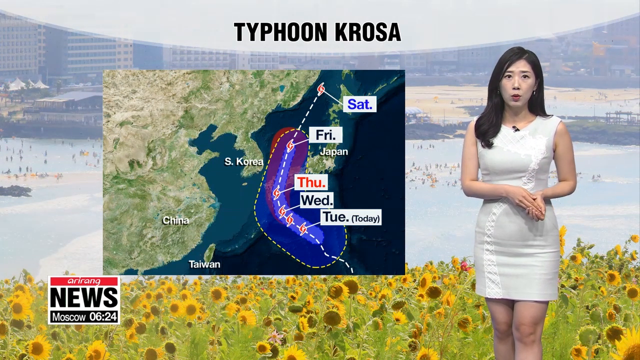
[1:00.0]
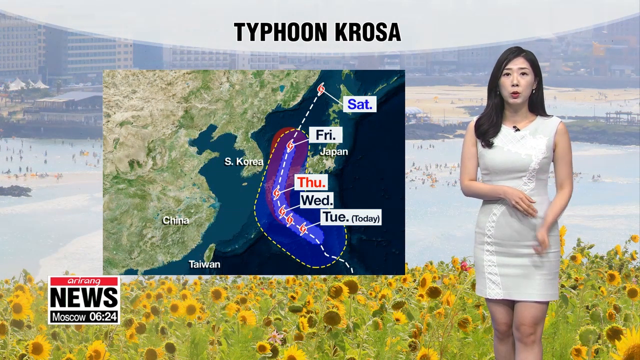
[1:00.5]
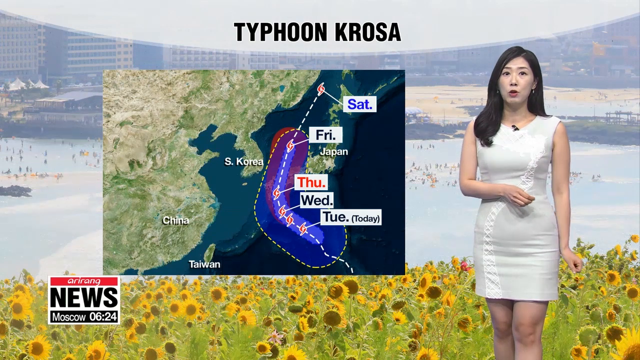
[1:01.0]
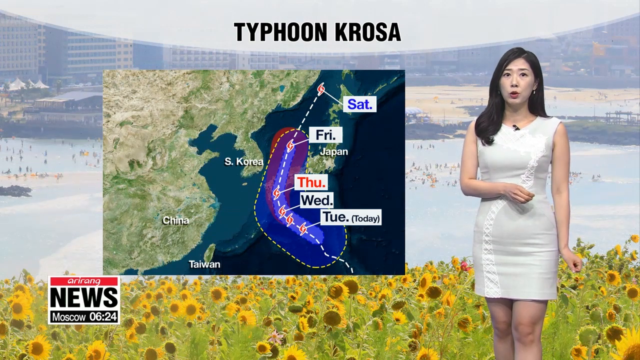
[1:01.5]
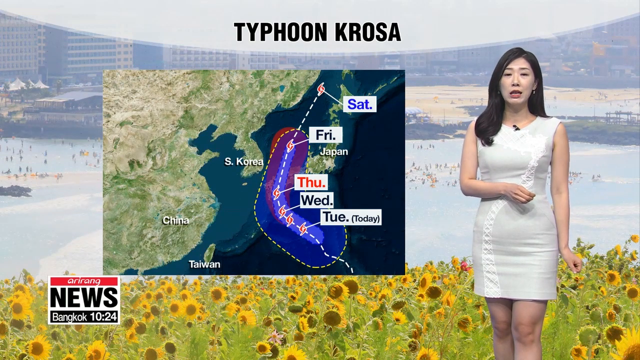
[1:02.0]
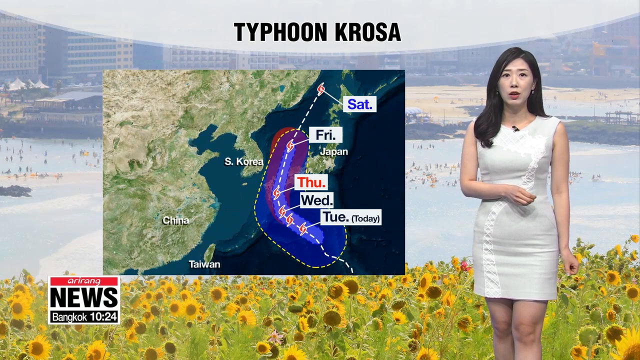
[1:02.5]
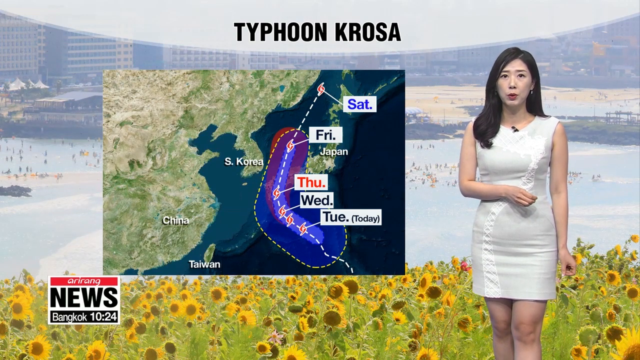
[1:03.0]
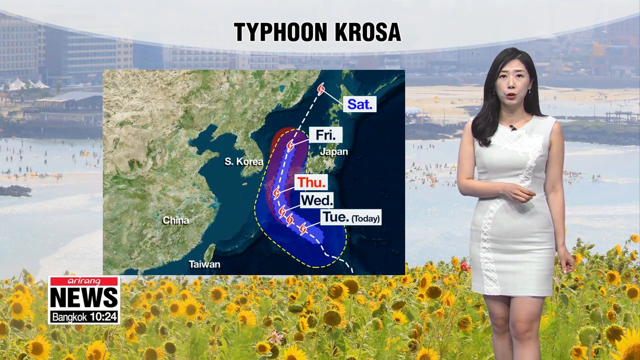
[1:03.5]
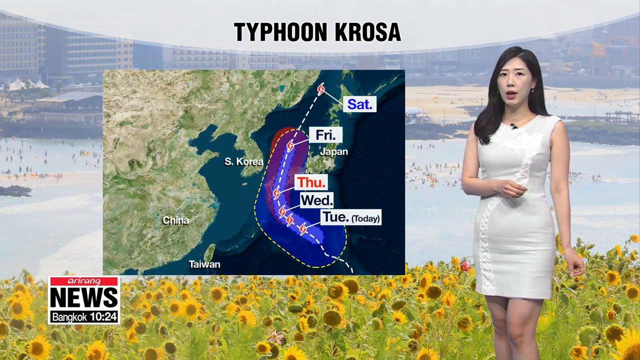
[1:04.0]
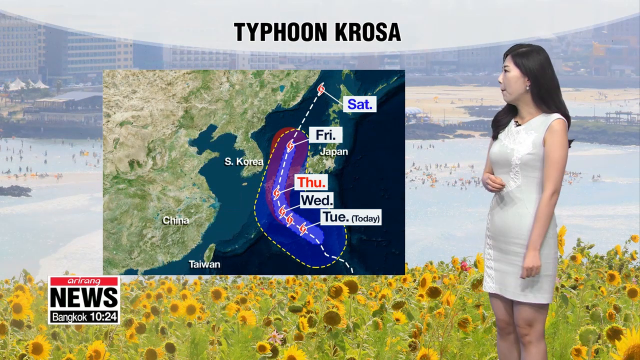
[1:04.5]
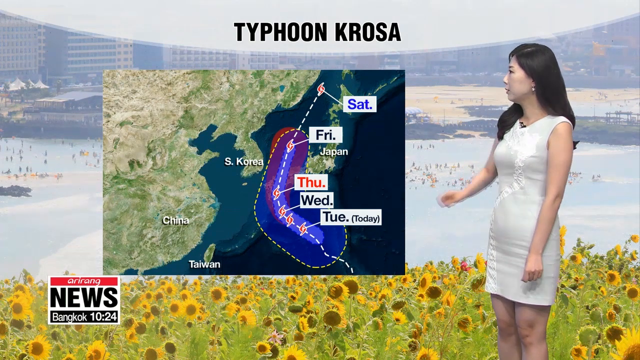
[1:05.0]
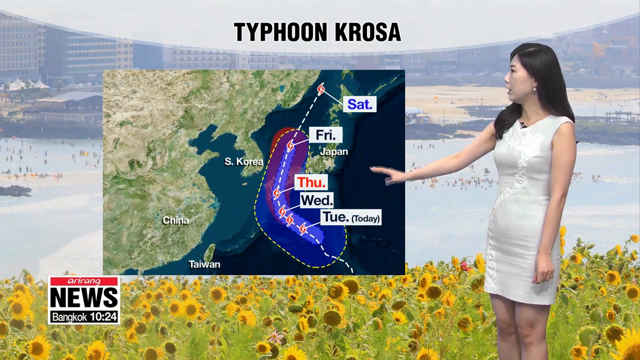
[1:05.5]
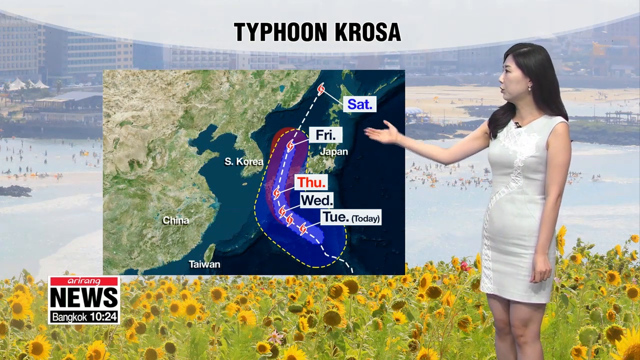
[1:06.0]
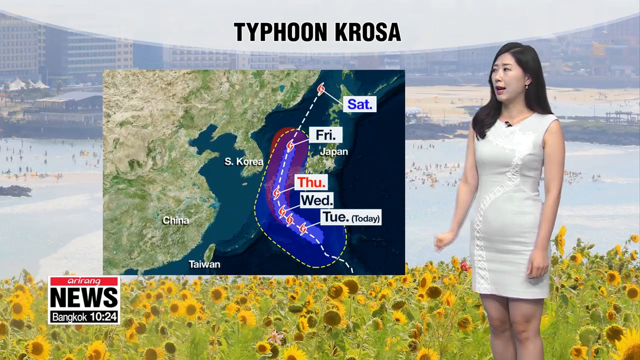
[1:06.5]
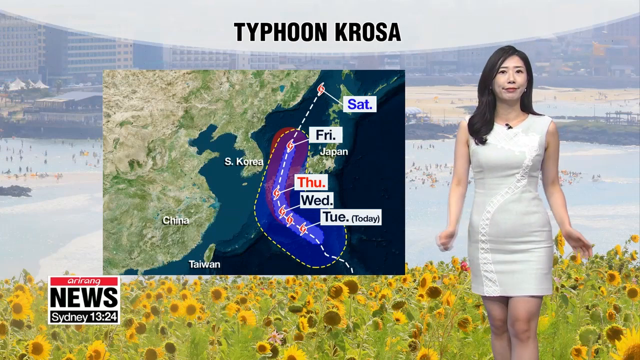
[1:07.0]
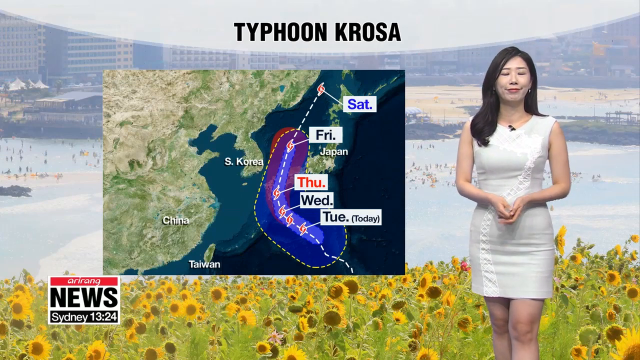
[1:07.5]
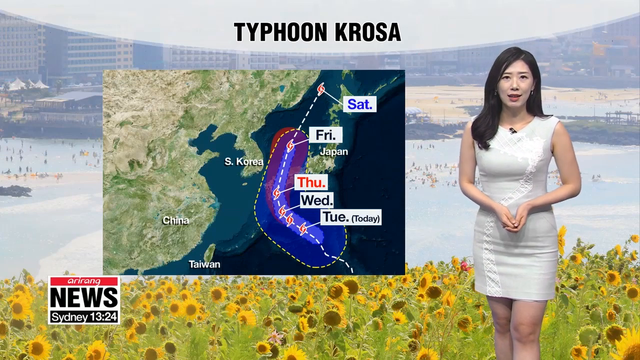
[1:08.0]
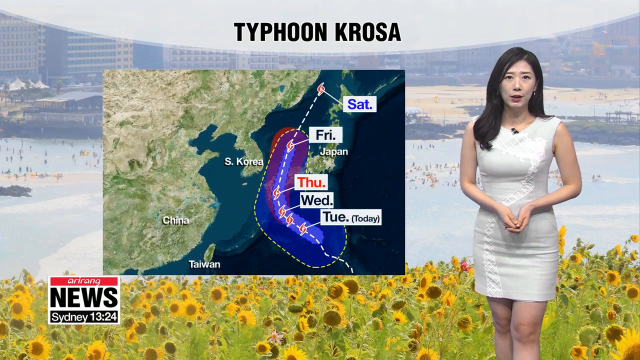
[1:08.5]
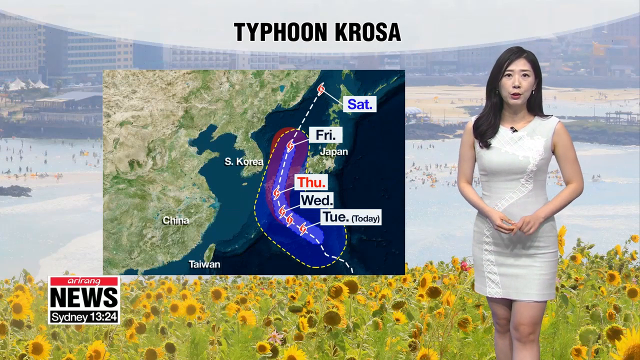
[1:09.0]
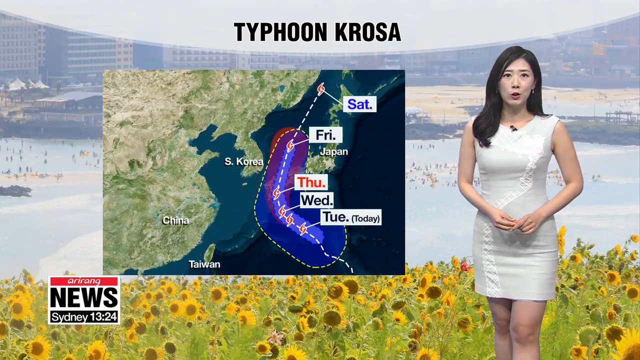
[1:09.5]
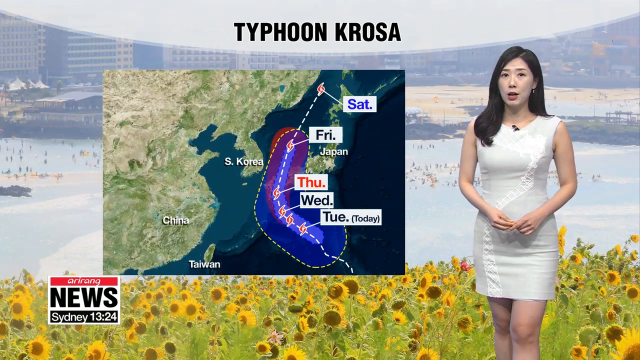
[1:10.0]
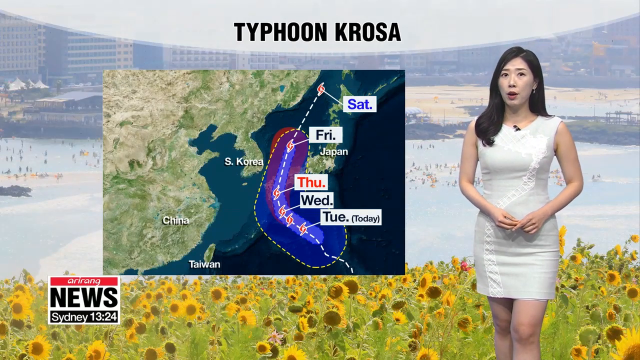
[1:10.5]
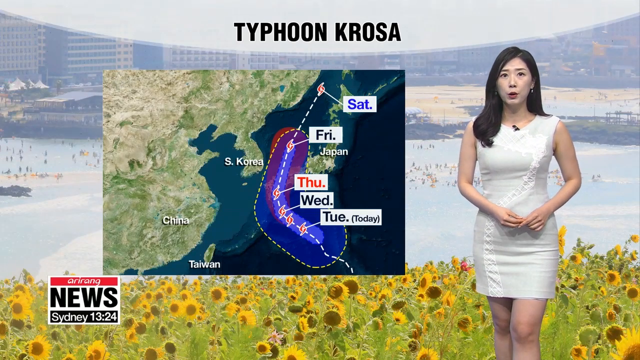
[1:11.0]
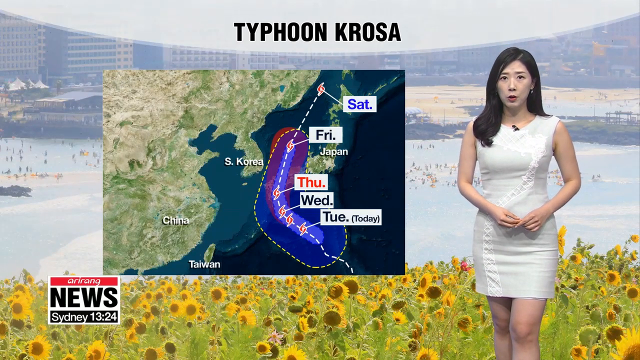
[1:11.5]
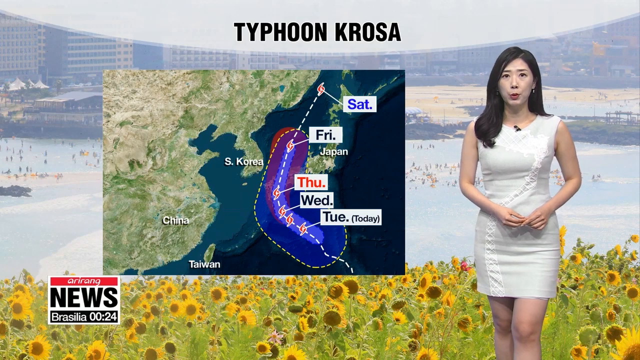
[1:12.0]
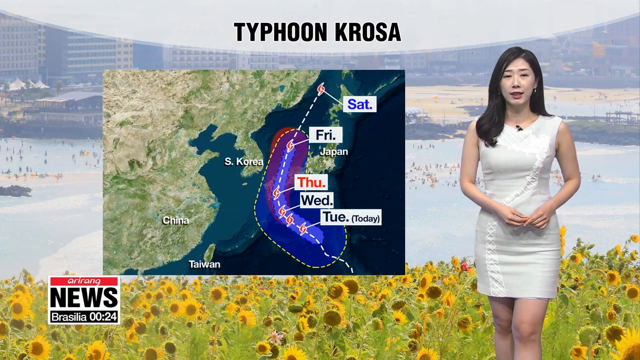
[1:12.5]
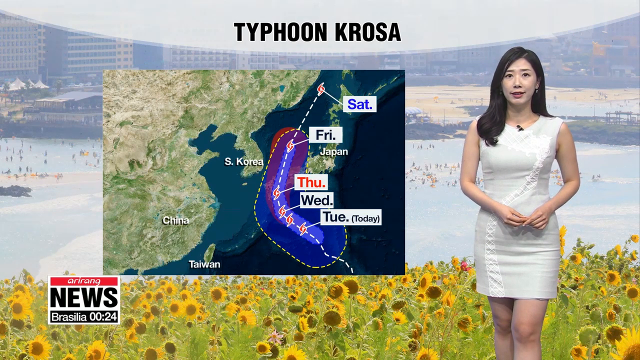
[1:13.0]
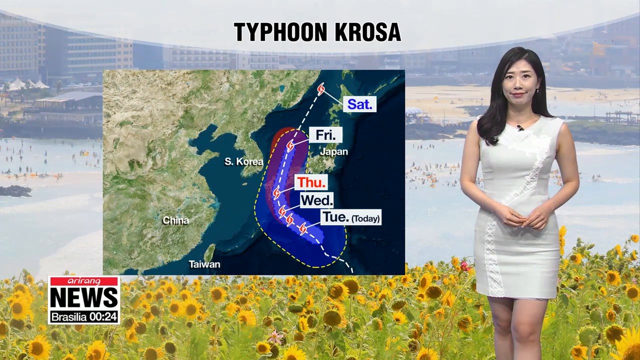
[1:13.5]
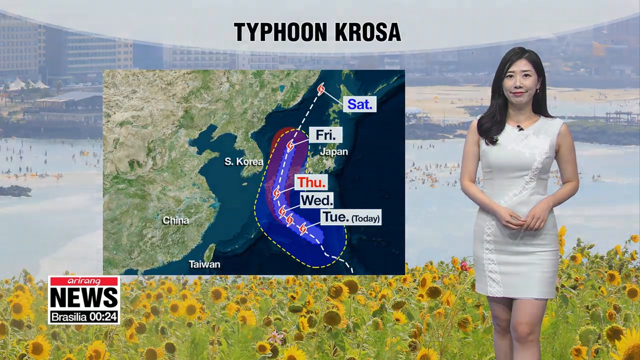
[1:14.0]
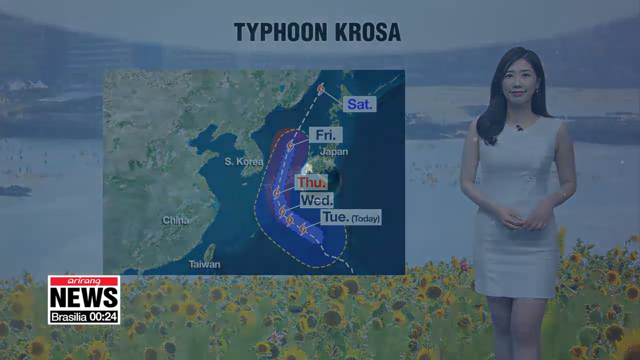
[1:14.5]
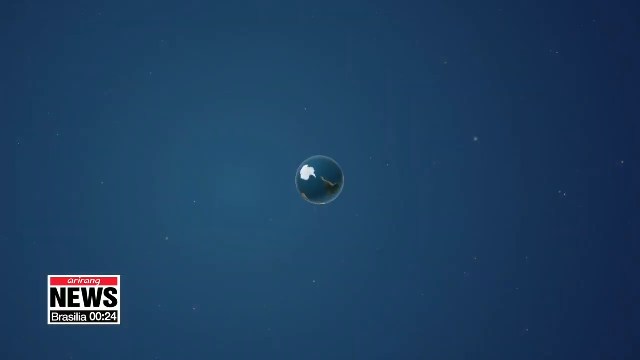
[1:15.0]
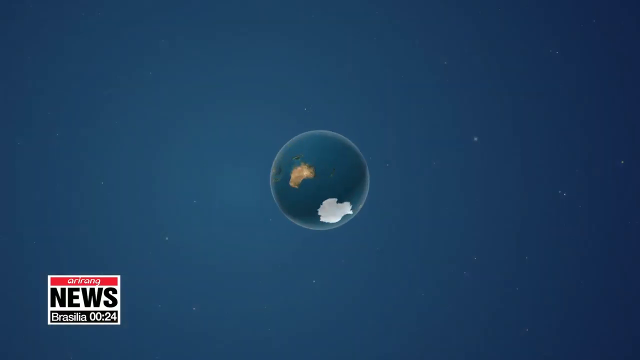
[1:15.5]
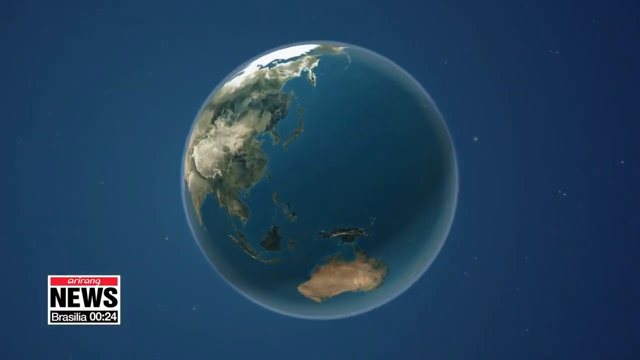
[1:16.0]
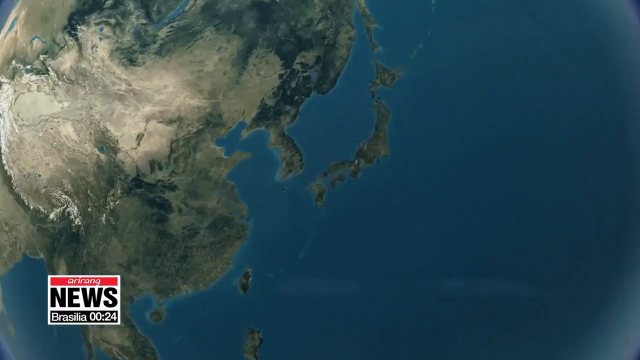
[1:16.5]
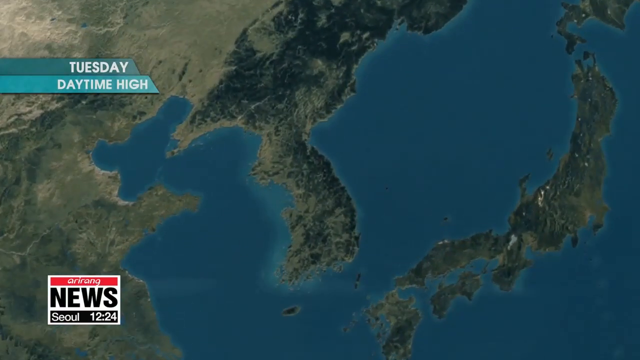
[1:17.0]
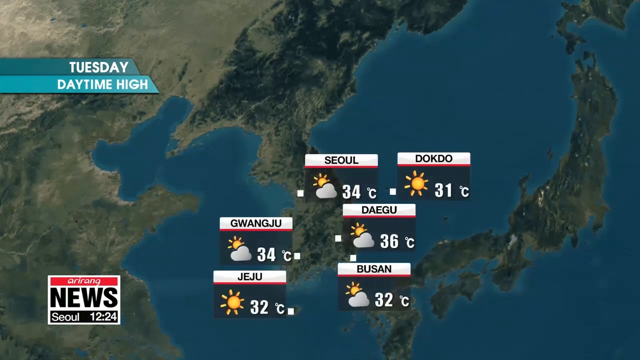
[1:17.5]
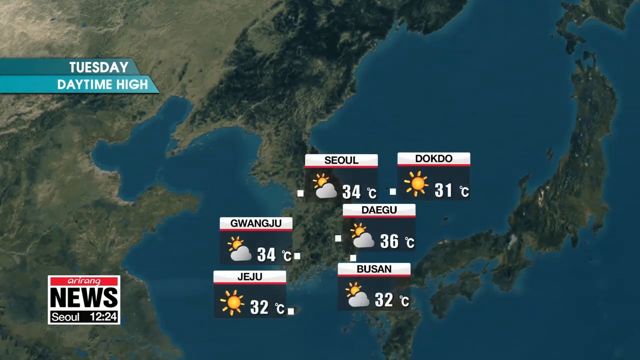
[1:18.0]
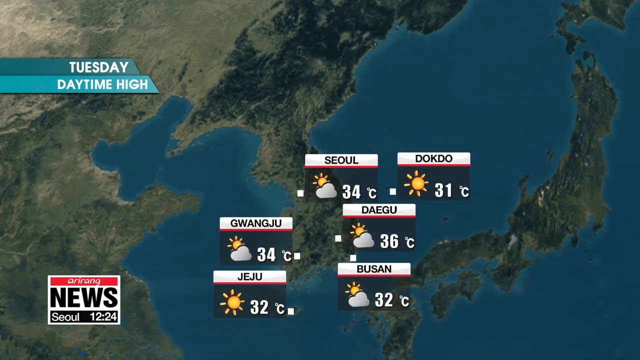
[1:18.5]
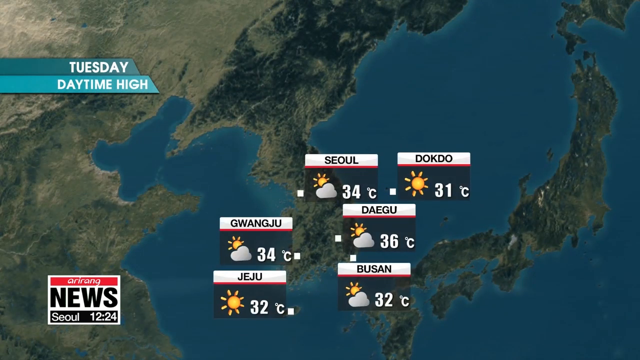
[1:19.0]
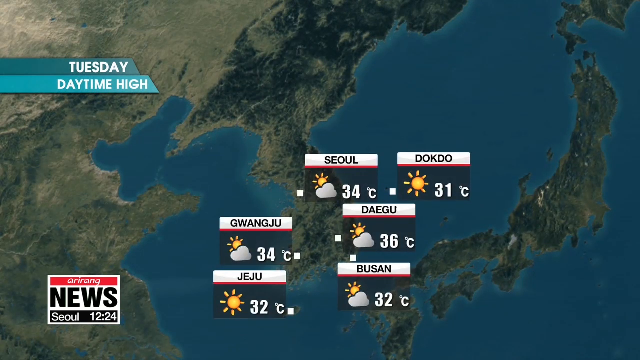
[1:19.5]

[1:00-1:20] The background remains the same. The top semicircle bubble now reads "Typhoon KROSA" in black. The center region is a graphic map of the typhoon's track. It flows from the bottom right slightly to the left, tracking left through Tuesday and Wednesday; on Thursday it begins to angle up and to the north, with Thursday to Friday at a northerly angle and cresting around. It moves between Japan and South Korea. The woman nods seriously, her right upper arm folded across her midriff. She then extends her right arm and hand, palm flat and pointed upward, to gesture along the typhoon's track. Her hands then join across her middle, fingers holding on to one another and twisting slightly in an uncomfortable fashion. She speaks seriously while facing front. The screen then changes to all blue, and a globe appears in the center, rotating and growing larger until it is centered on South Korea. A temperature map appears with temperatures for places including Seoul, Deokdo, Daegu, Busan, Jeju and Gwangju.